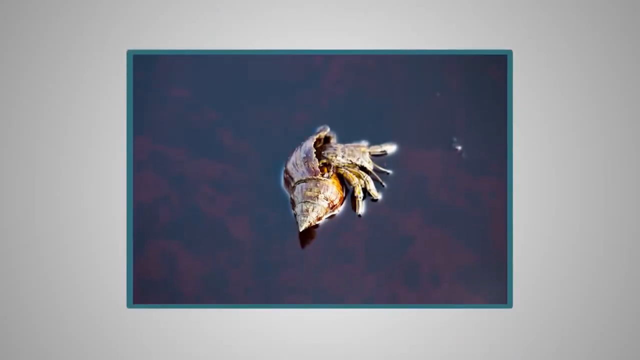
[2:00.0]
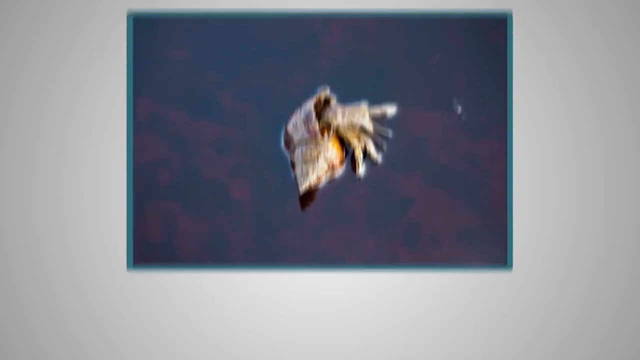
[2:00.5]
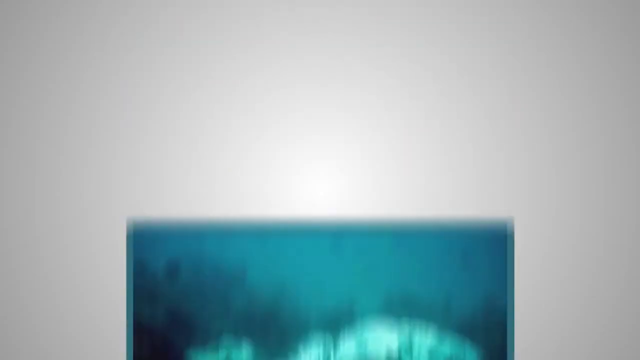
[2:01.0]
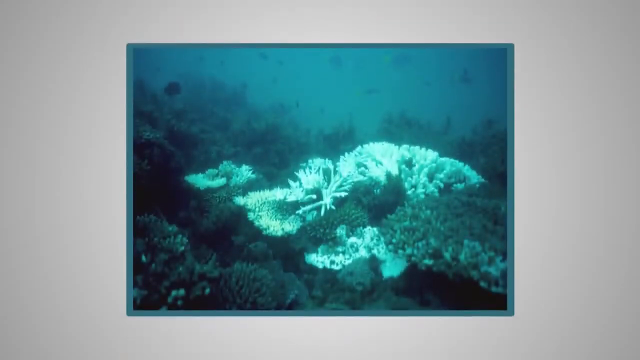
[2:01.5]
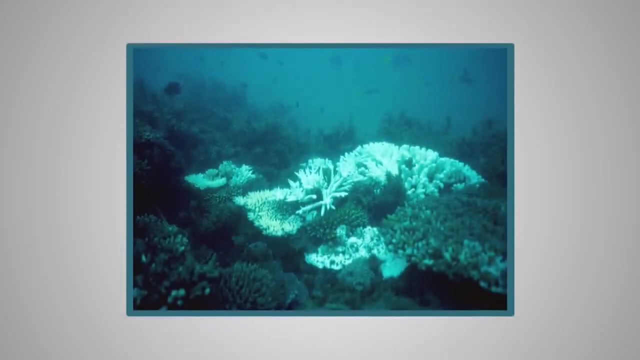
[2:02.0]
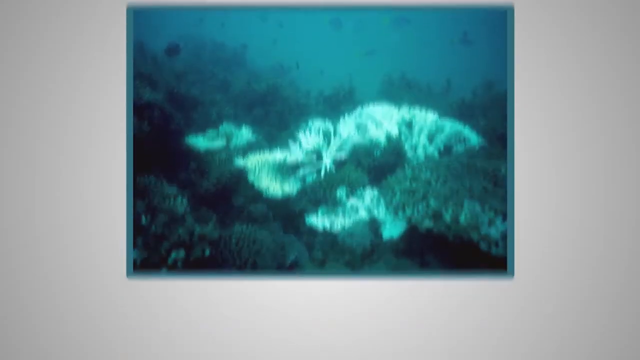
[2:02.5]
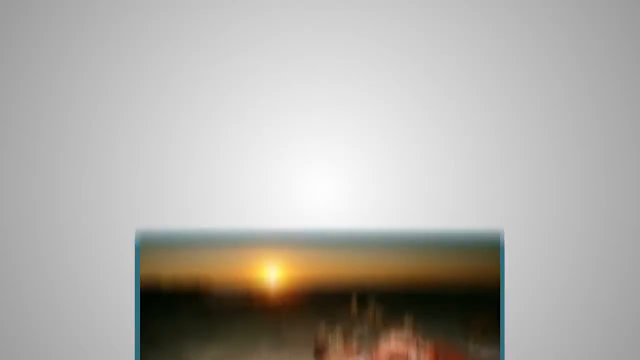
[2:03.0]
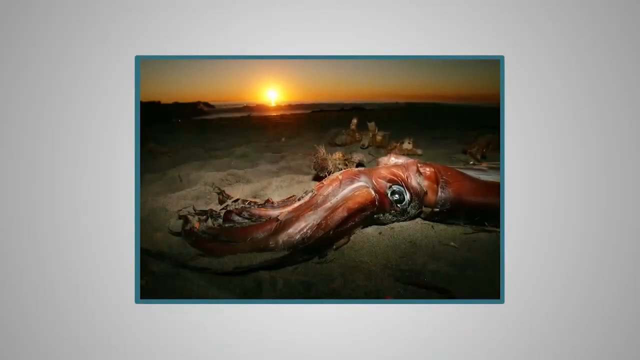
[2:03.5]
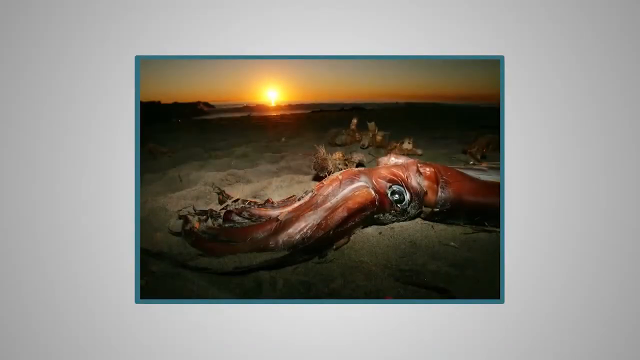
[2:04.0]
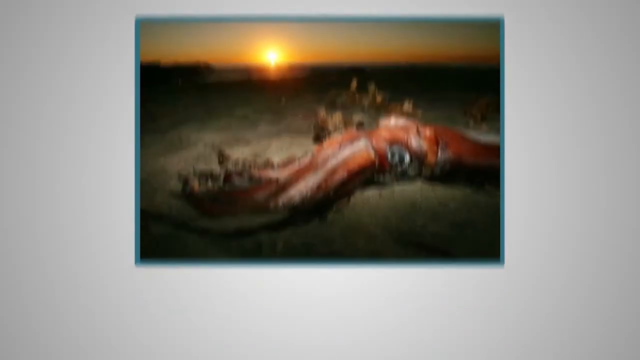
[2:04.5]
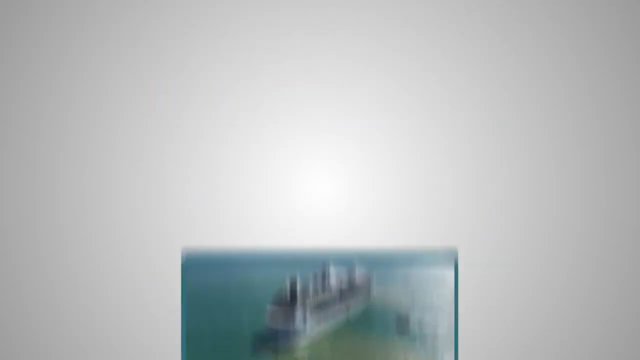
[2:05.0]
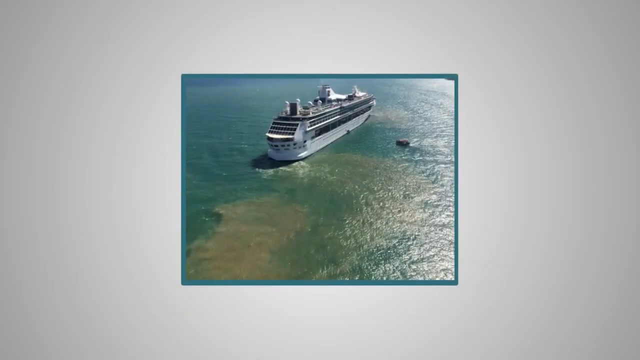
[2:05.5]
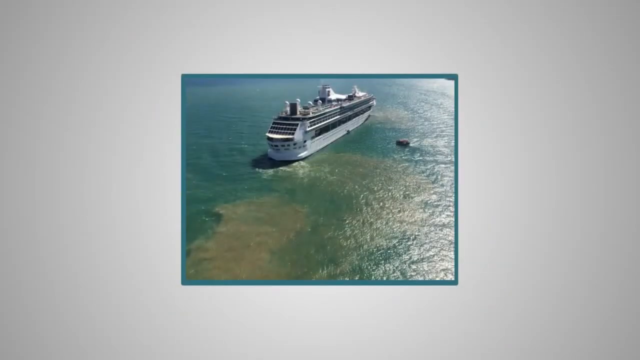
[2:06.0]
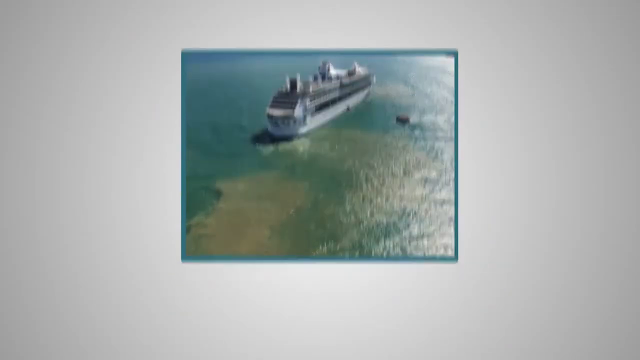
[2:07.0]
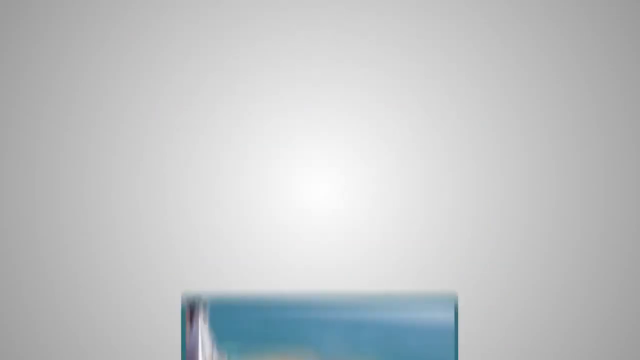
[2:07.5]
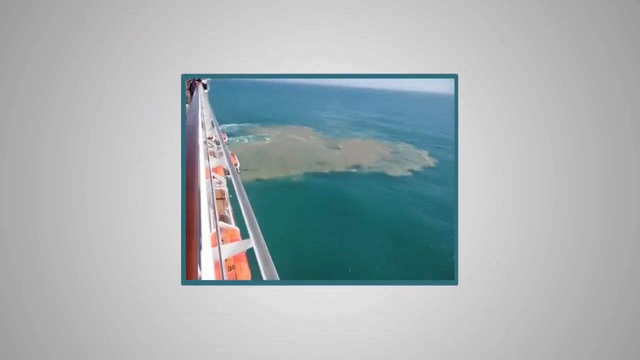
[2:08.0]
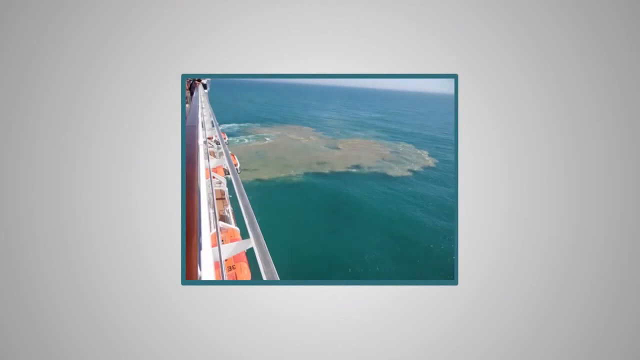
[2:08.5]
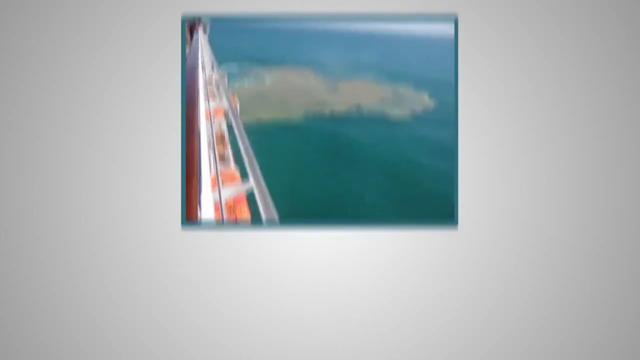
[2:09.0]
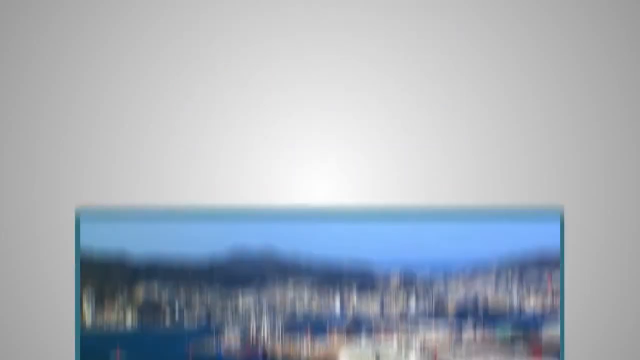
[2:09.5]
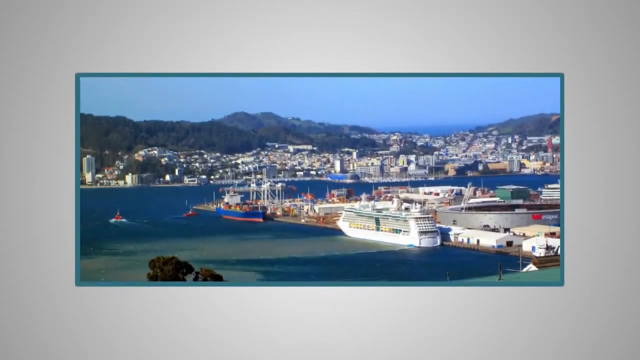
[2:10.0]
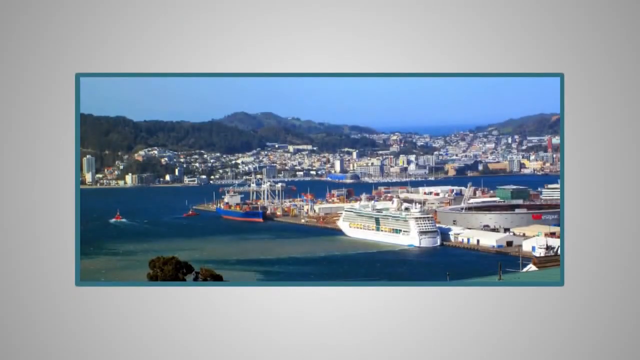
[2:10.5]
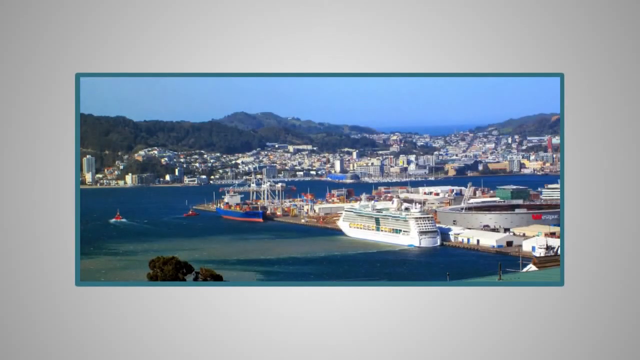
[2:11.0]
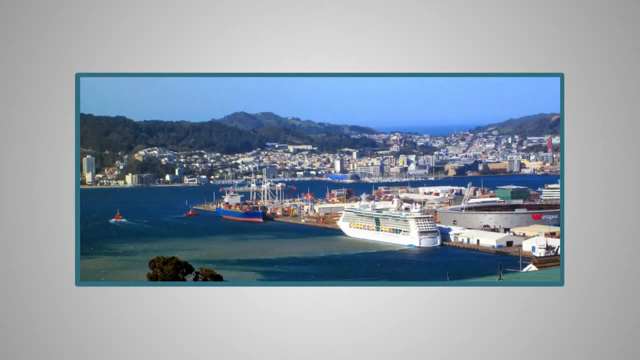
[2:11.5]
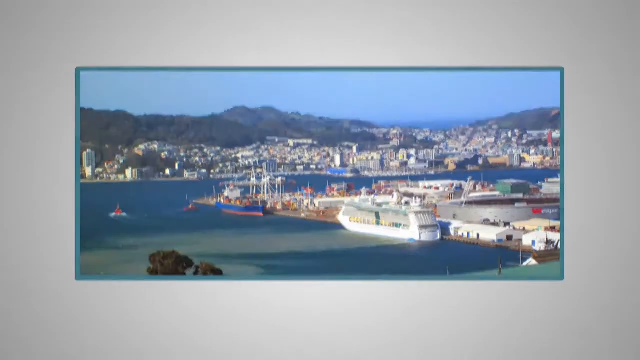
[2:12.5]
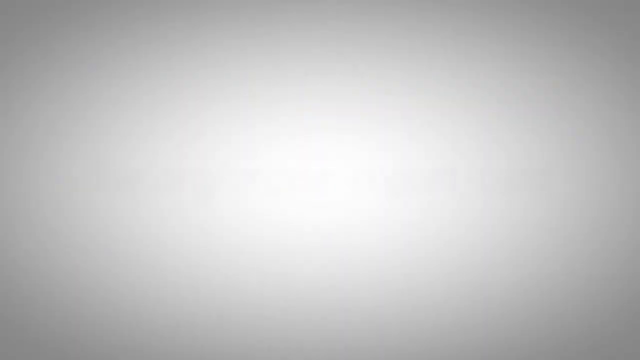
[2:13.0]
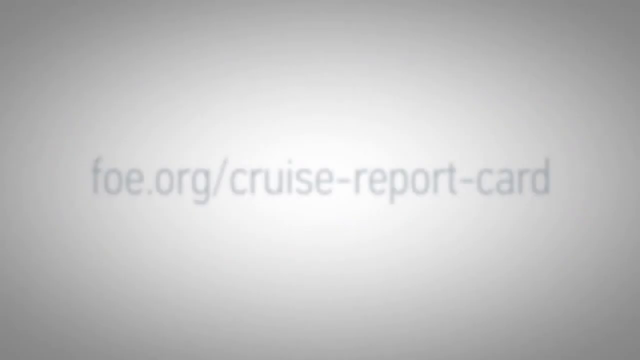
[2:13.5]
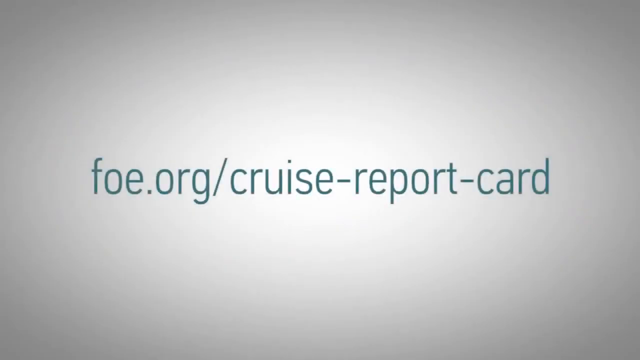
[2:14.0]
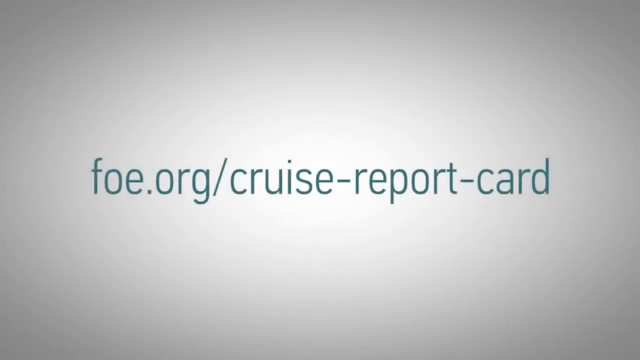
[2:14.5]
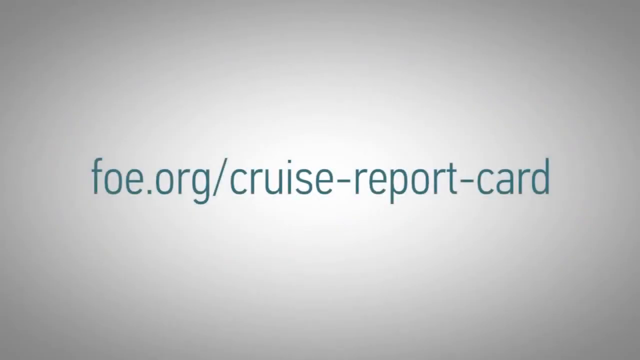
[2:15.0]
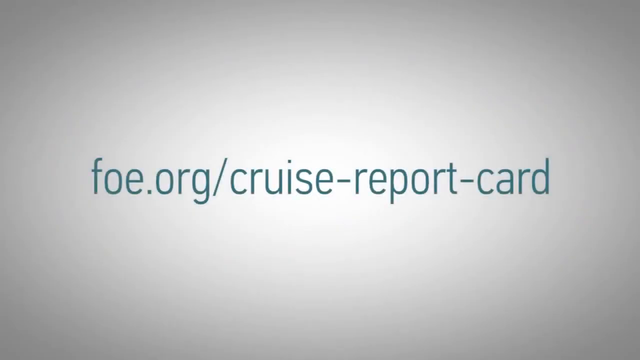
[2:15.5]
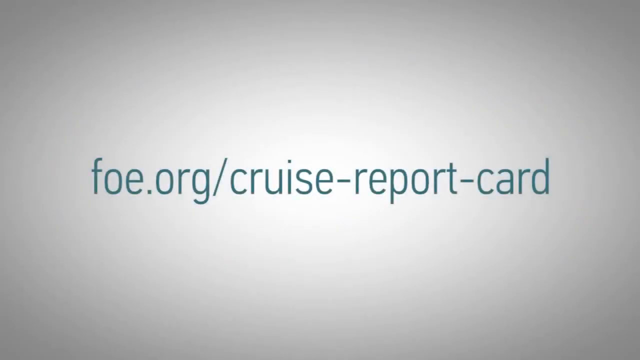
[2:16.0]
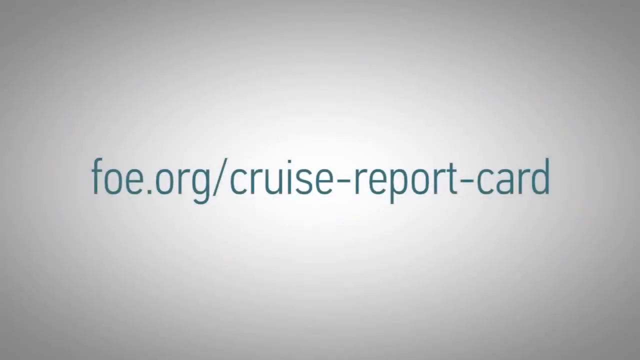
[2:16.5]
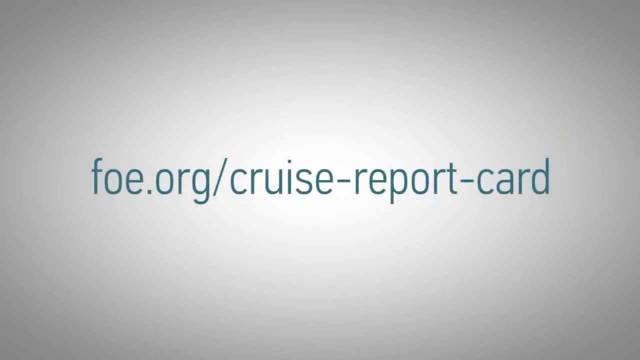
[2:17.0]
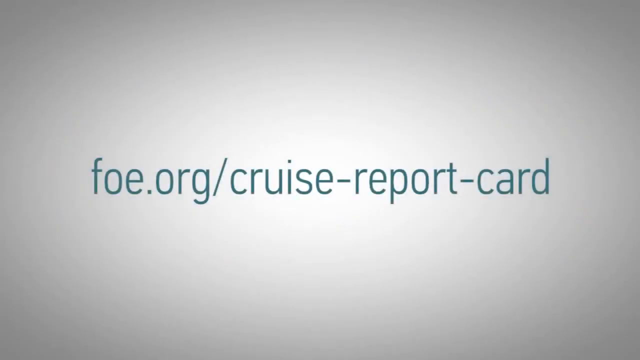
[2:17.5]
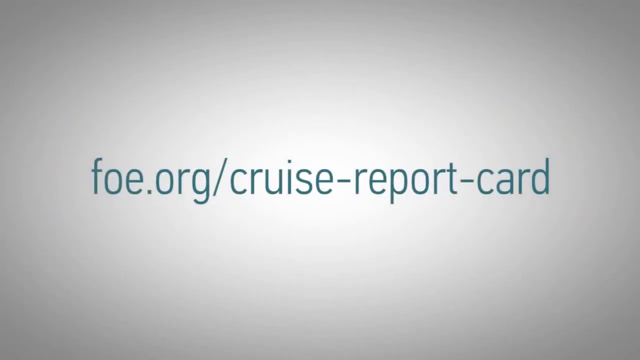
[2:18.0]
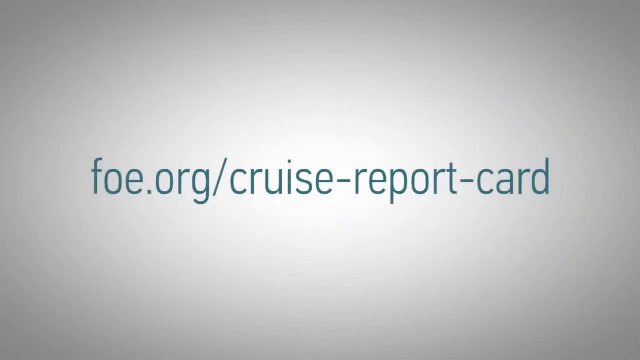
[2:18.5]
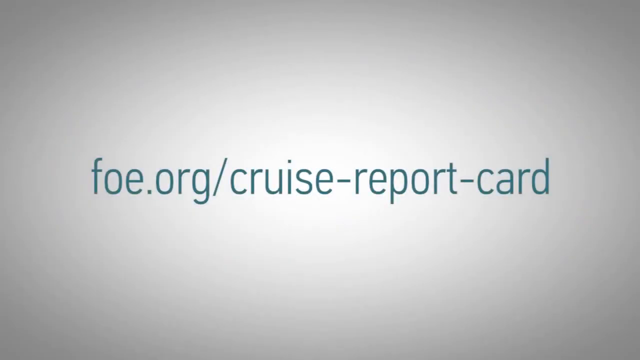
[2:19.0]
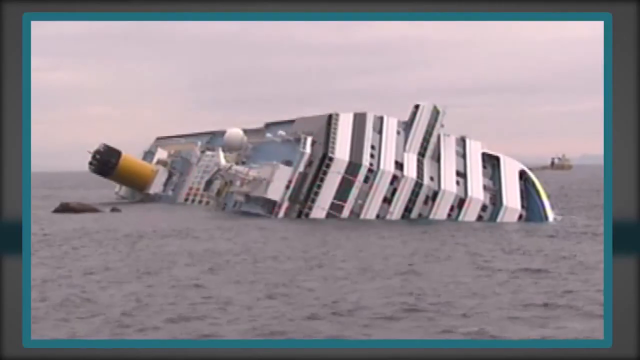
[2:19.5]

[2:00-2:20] A still of underwater sea life is in blue and teal tones and illuminated, with coral that looks healthy. A picture at sunset shows a reddish octopus that looks dead, lying on the sand, with bright yellows of the sunset in the background. An aerial view shows a cruise ship far away surrounded by brown water, possibly dumped from the ship. Another perspective of the same thing, possibly taken from the railing of the boat, looks like sewage being dumped into the ocean. A picture of a harbor follows, with a cruise ship docked, other boats on the water and docked, a city in the background, and rolling hills. At the end, a white and gray background that is a little brighter in the middle shows "foe.org\cruise-report-card" in all lowercase letters in a dark teal-green color.